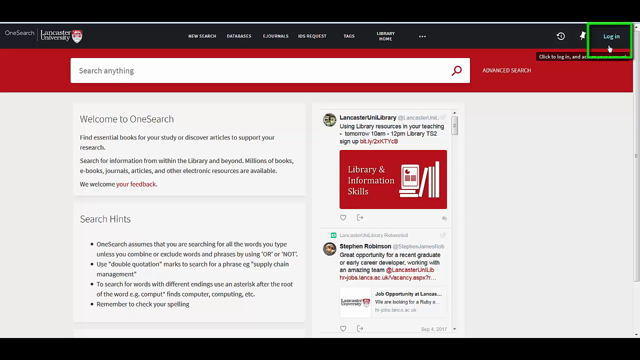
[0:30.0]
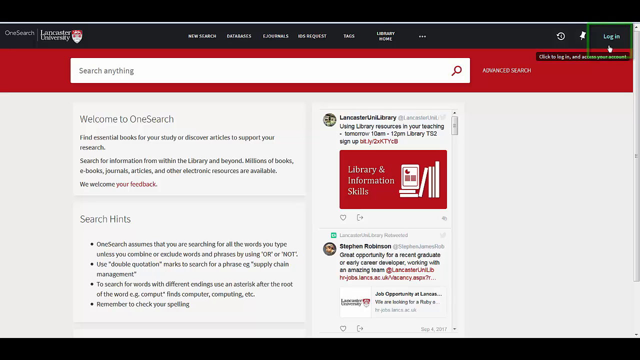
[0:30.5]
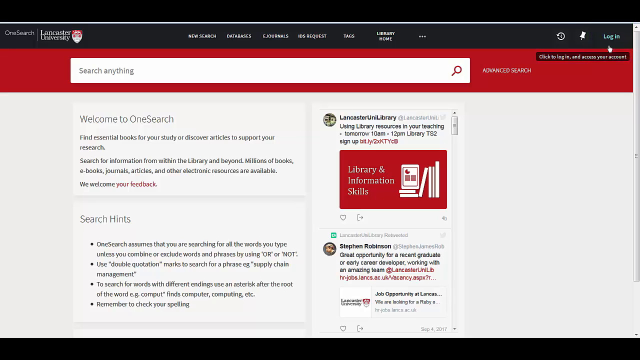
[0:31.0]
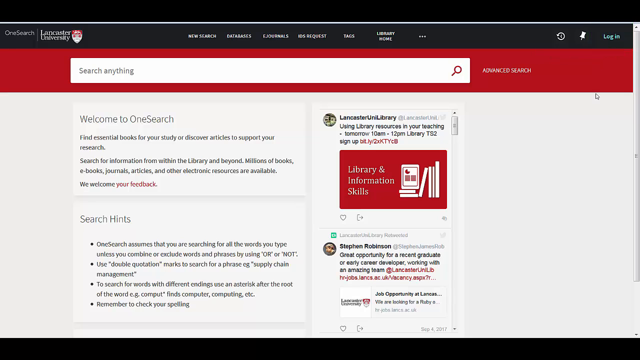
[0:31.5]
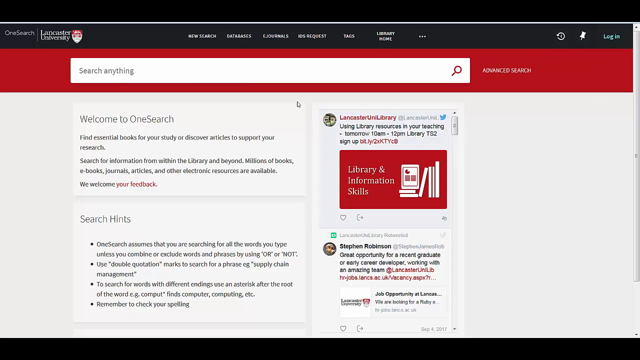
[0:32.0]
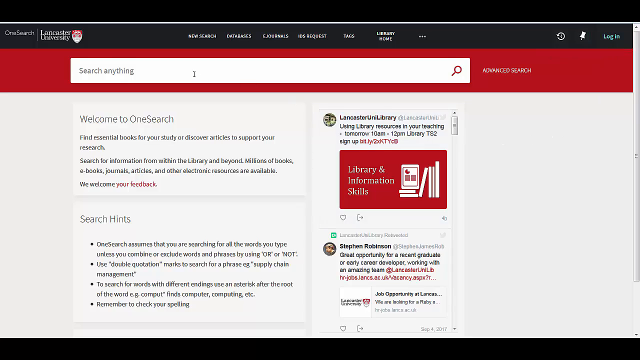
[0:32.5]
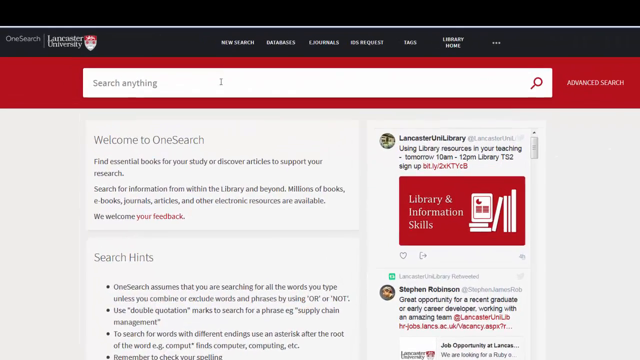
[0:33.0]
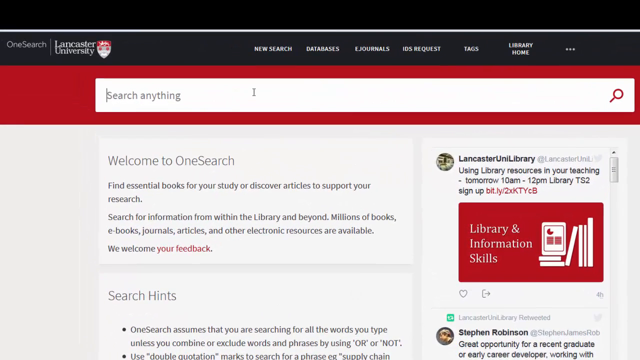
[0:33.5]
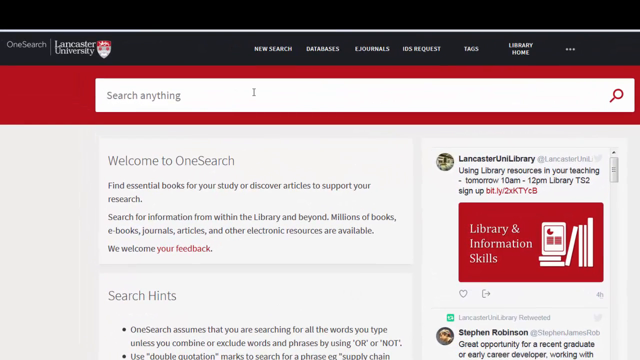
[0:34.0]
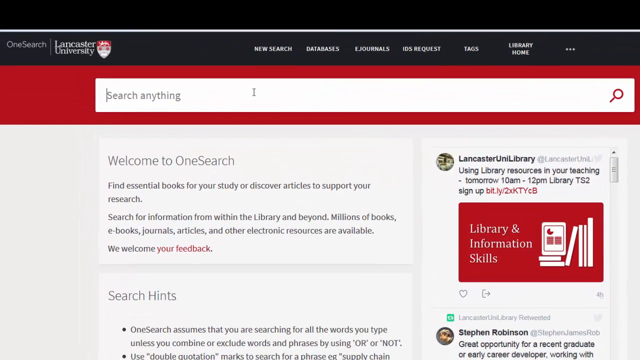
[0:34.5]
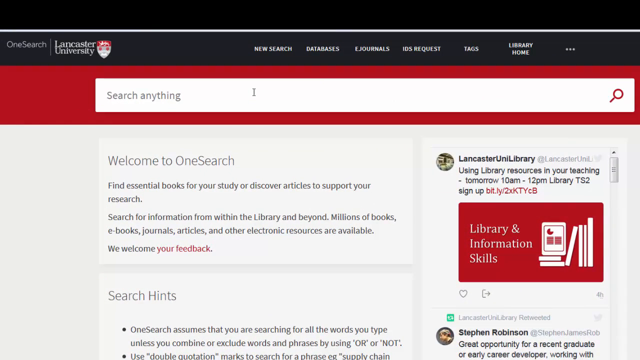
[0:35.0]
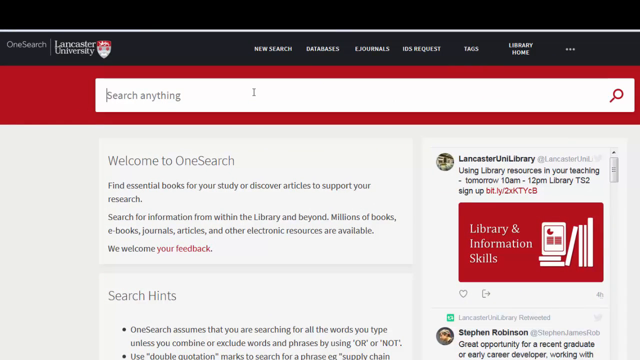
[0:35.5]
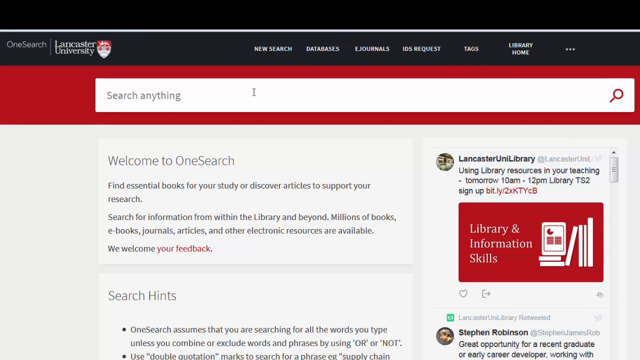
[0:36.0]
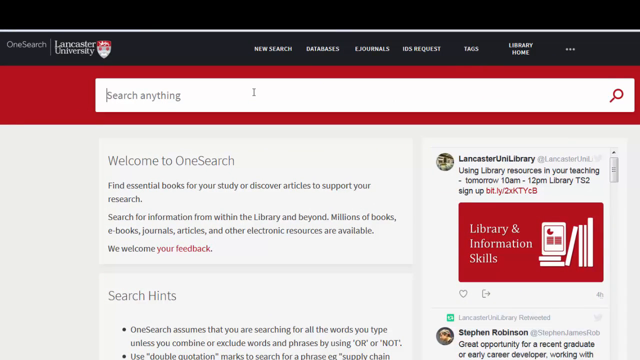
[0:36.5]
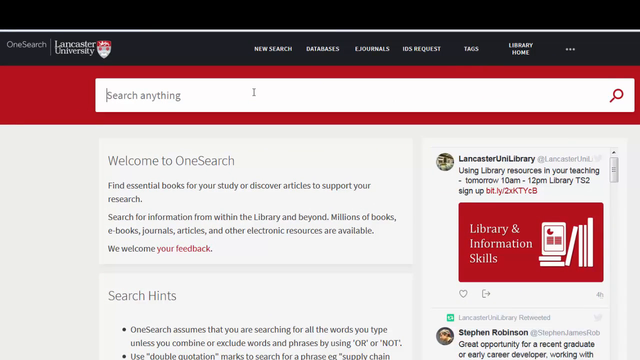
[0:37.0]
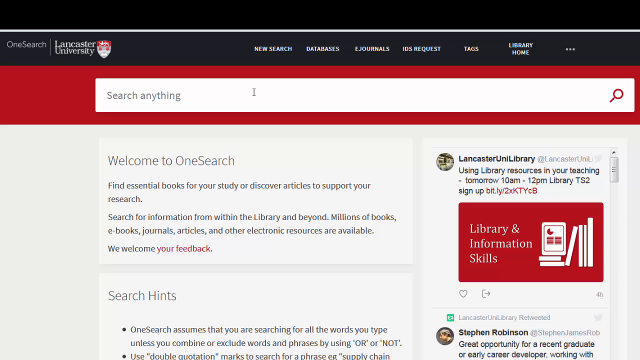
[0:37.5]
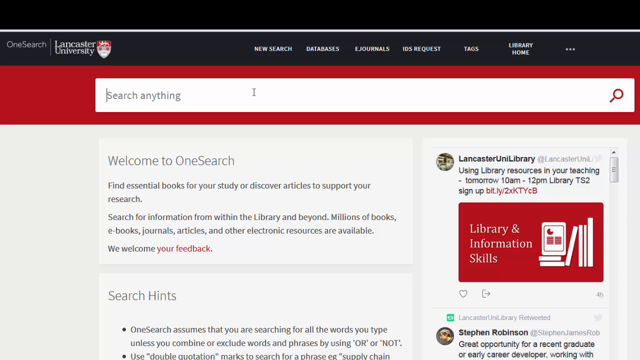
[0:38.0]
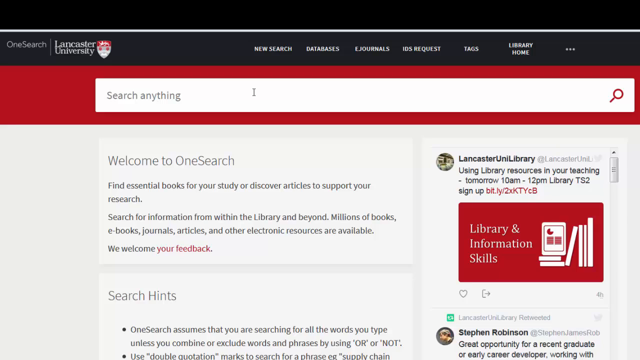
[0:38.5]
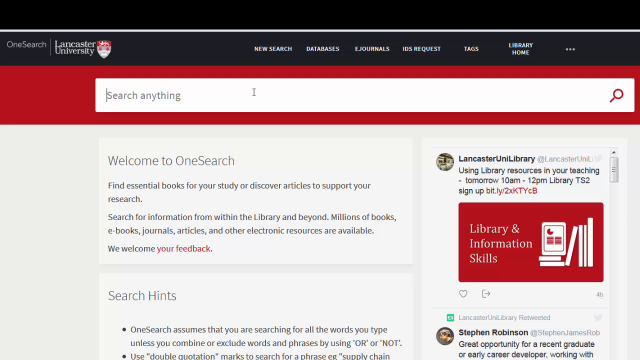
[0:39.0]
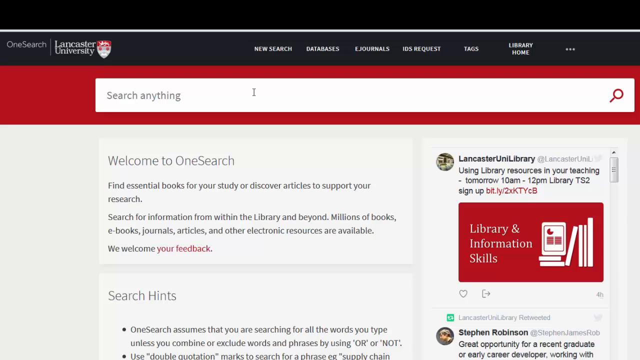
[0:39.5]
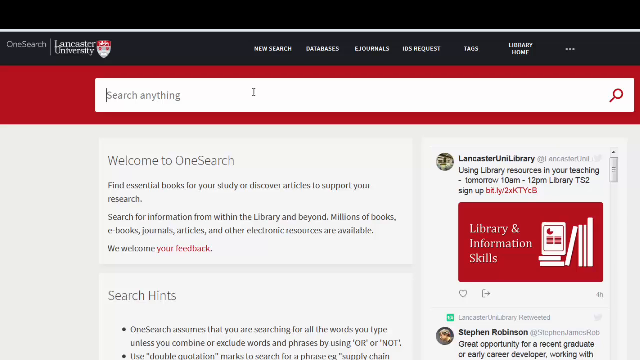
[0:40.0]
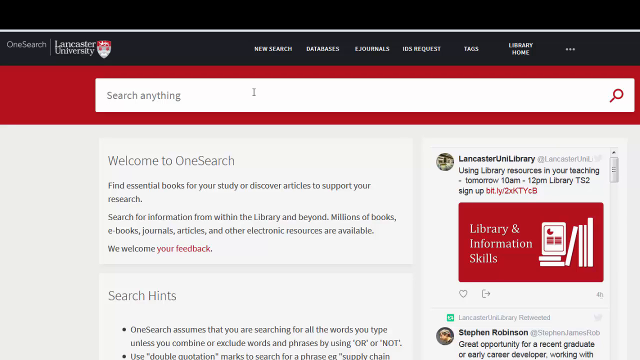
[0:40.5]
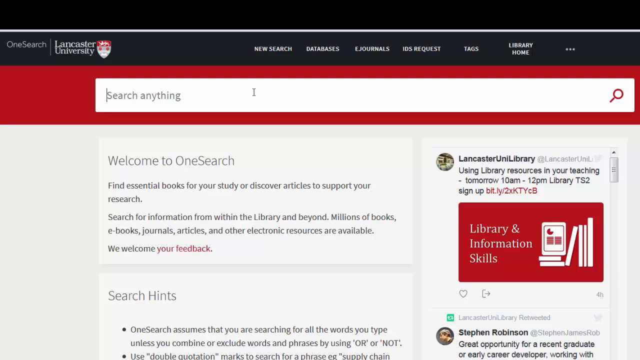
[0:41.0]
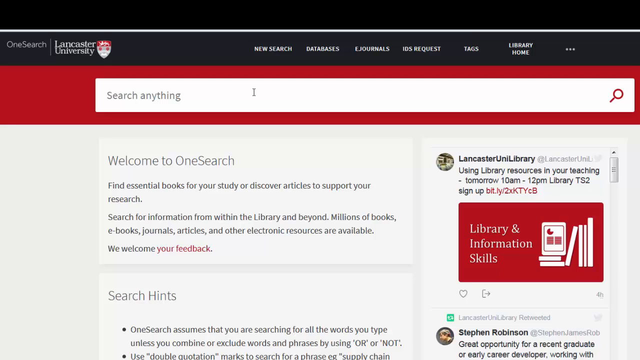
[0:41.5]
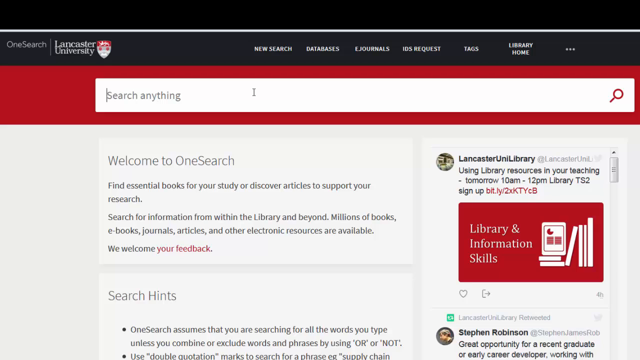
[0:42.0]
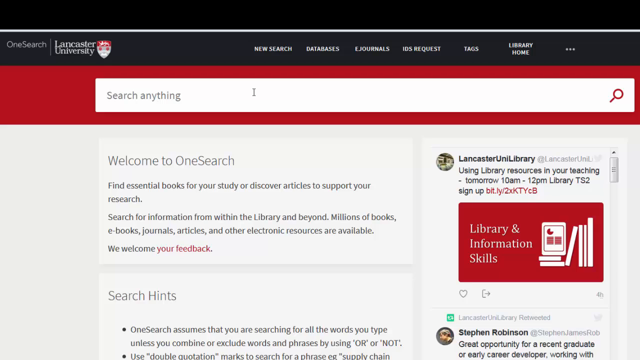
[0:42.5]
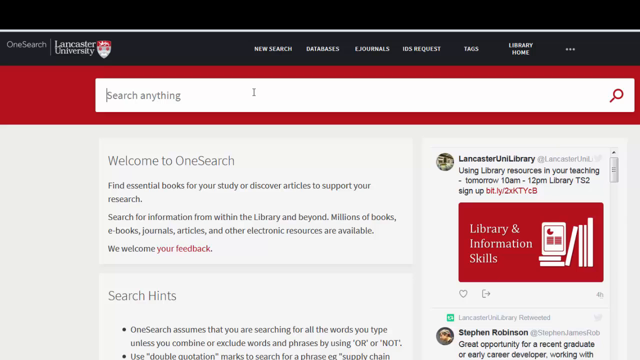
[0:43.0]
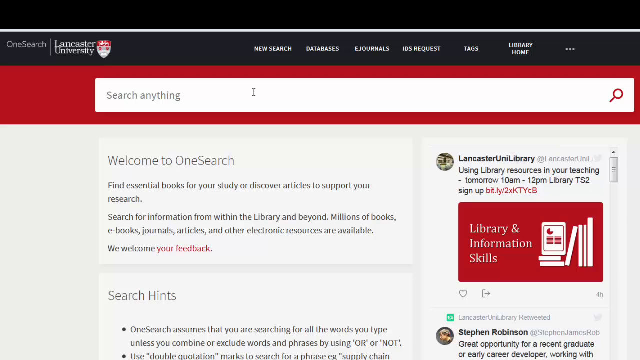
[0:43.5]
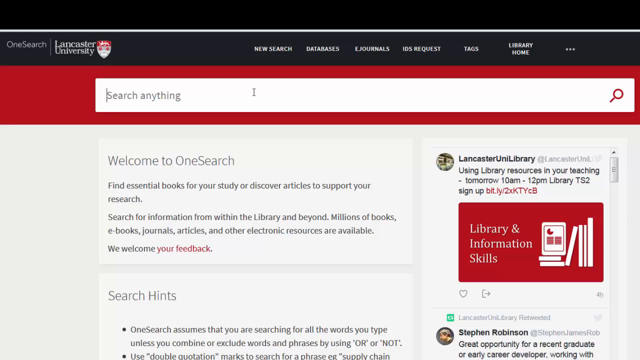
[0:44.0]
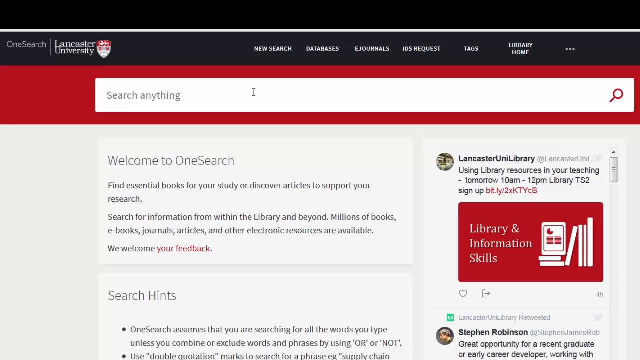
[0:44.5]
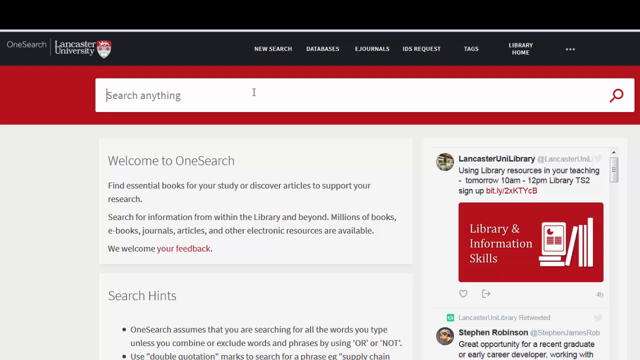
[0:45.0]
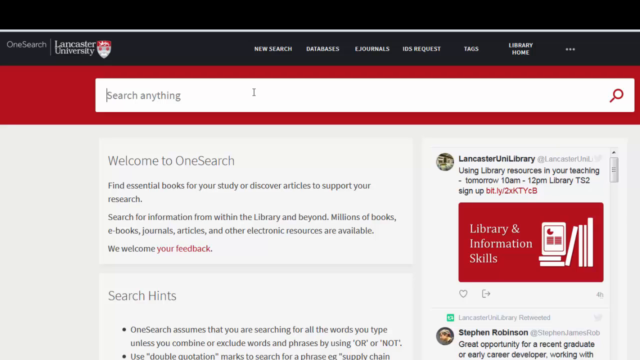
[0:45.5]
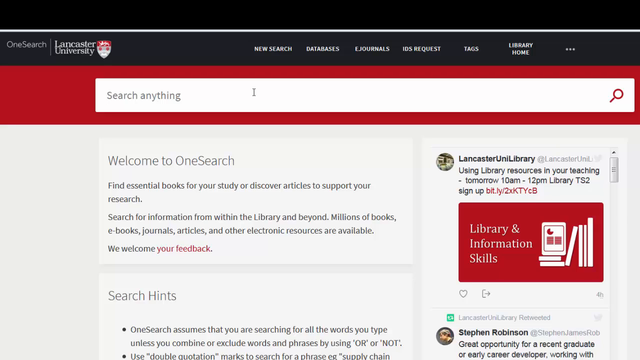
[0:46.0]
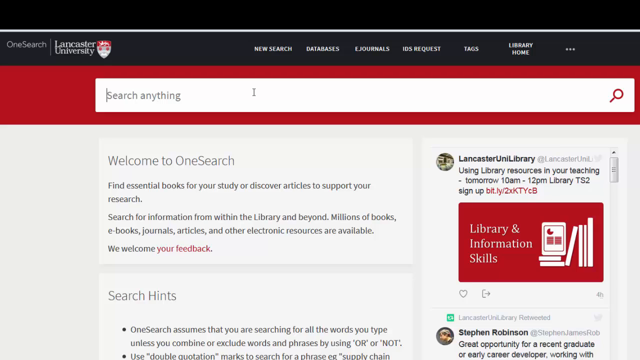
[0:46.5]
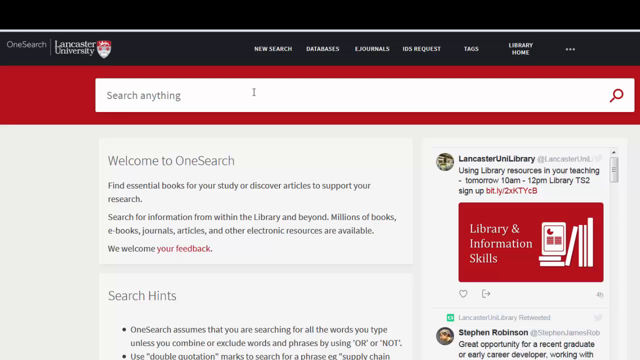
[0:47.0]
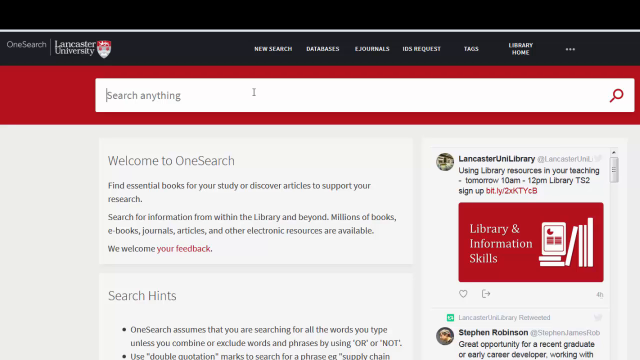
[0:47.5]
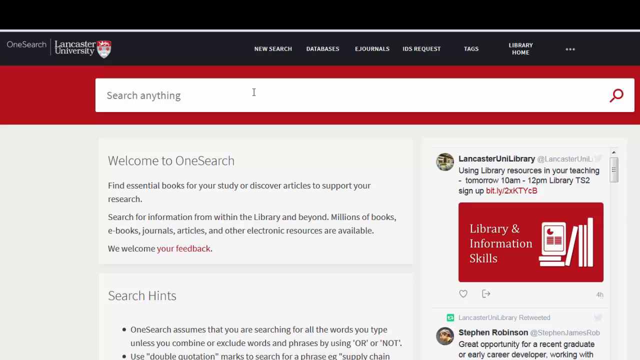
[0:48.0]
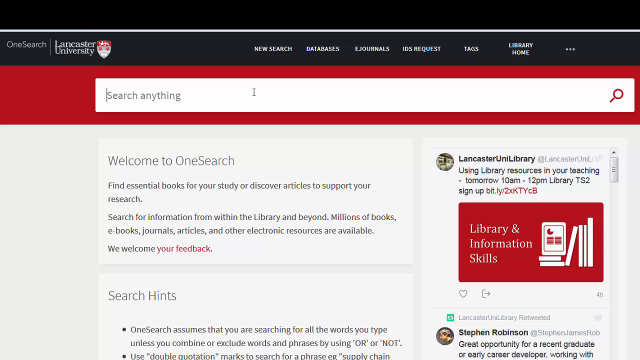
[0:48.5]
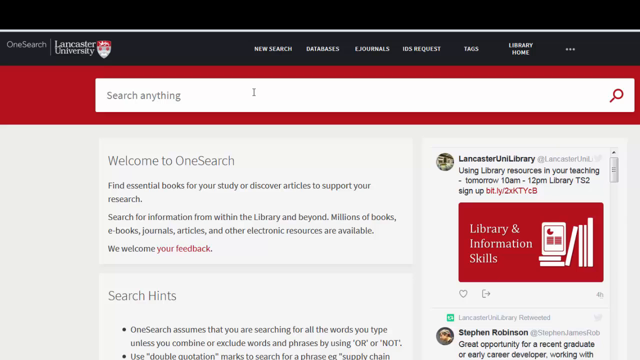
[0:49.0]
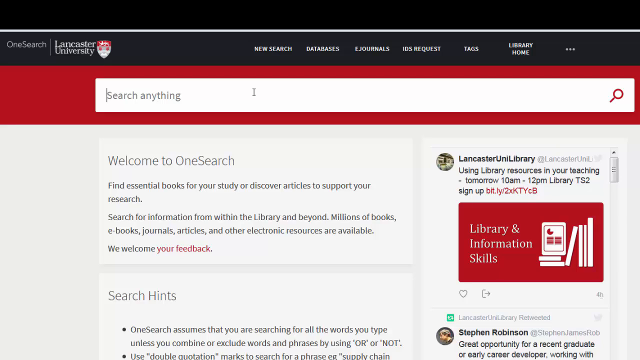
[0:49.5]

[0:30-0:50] The front page of what looks to be the Lancaster University website appears. The top of the screen is black, with the tabs "new search", "databases", "journals", "requests and tasks" and "library home" written across it. Below is a large white search bar on a red background. Underneath this, text reads "welcome to one search, find essential books for your study or discover articles to support your research. Search for information from within the library and beyond. Millions of books, e-books, journals, articles and other electronic resources are available. We welcome your feedback". To the right of these words is what looks to be a feed from some kind of social platform, showing that "Library and Information Skills" has been posted by somebody. The video then shows a close-up of the search bar with "Search Anything" written inside it. It appears the video is showing how to use this website to search for something within the university.